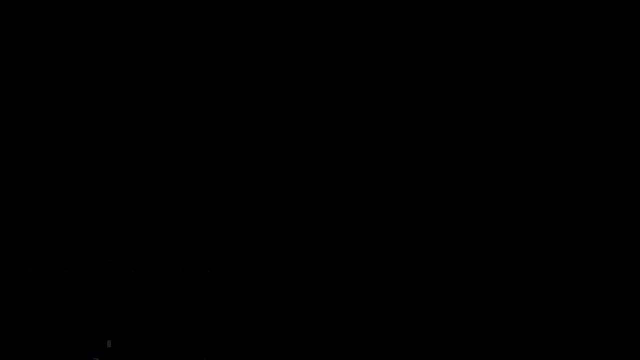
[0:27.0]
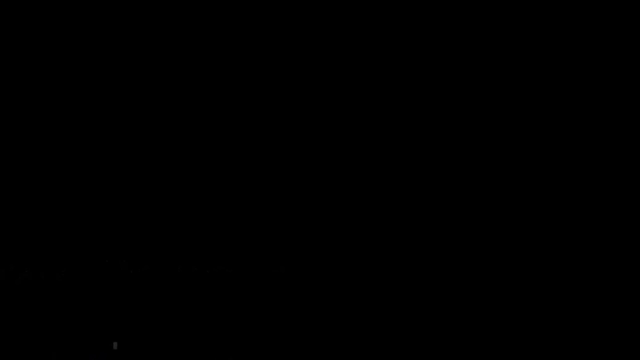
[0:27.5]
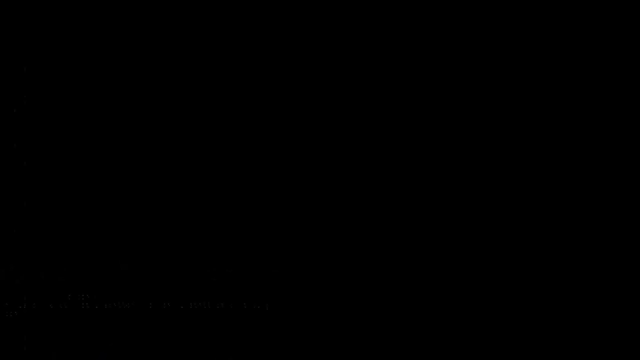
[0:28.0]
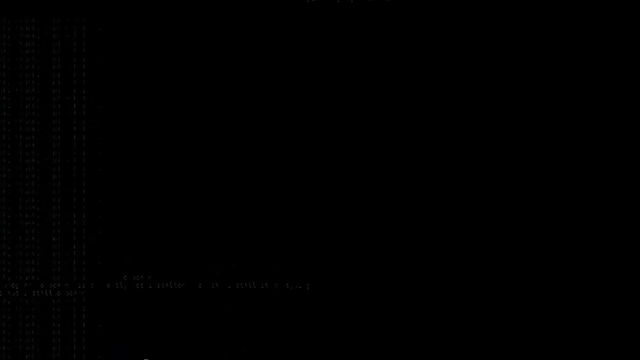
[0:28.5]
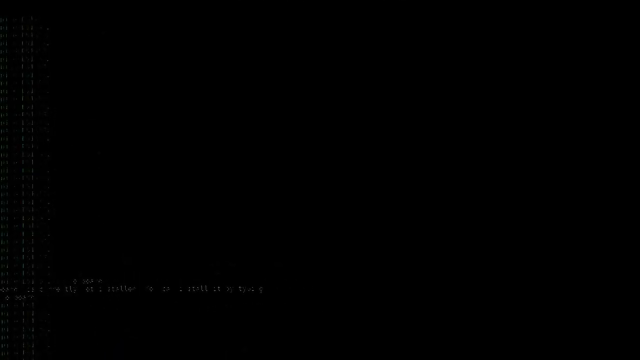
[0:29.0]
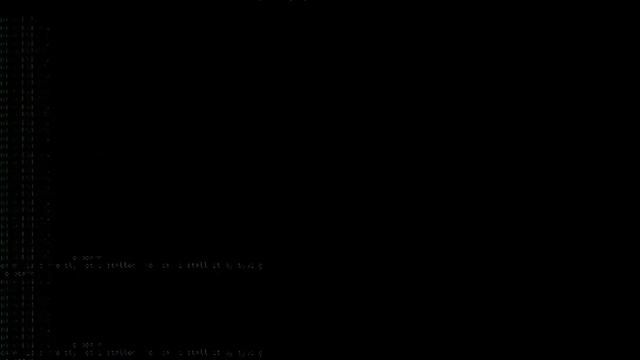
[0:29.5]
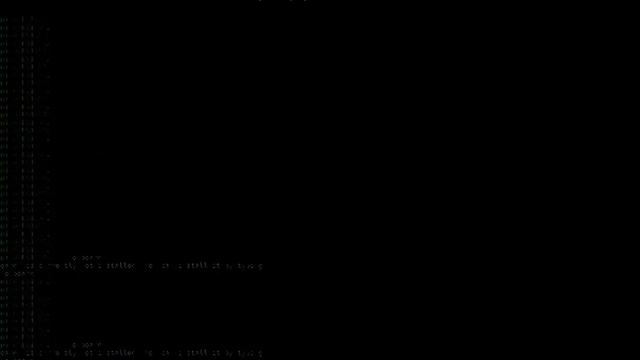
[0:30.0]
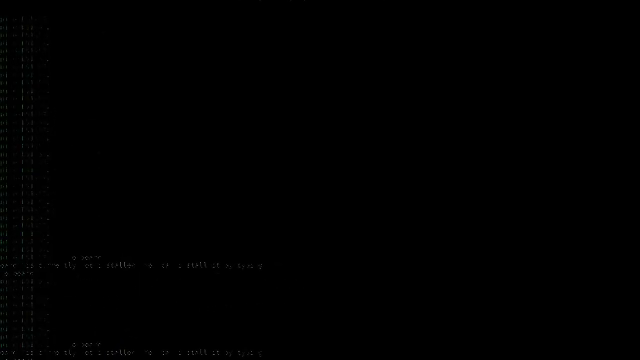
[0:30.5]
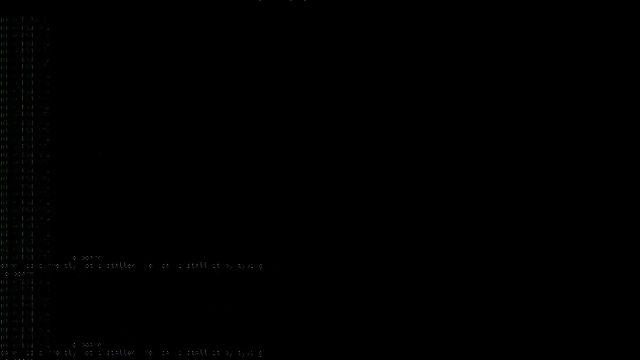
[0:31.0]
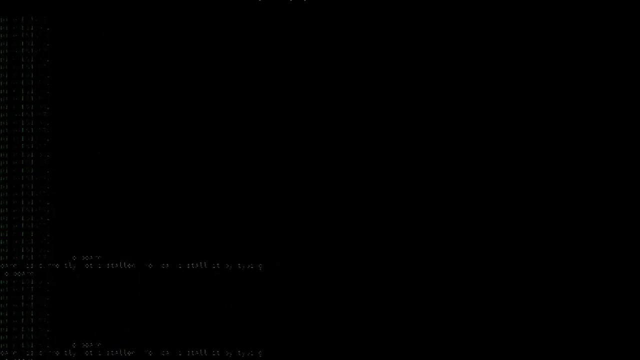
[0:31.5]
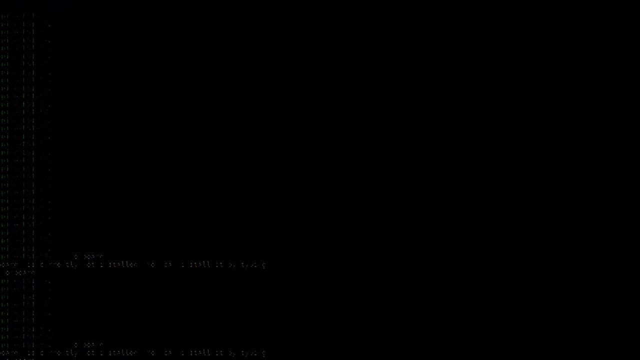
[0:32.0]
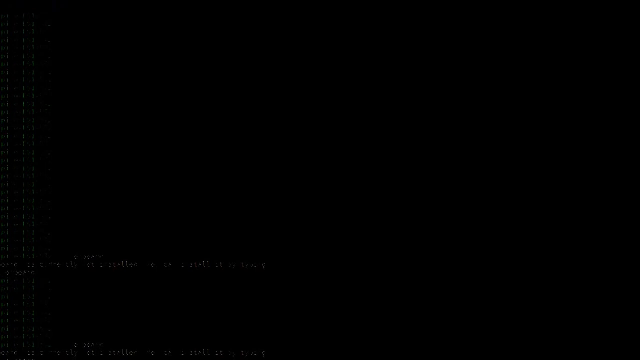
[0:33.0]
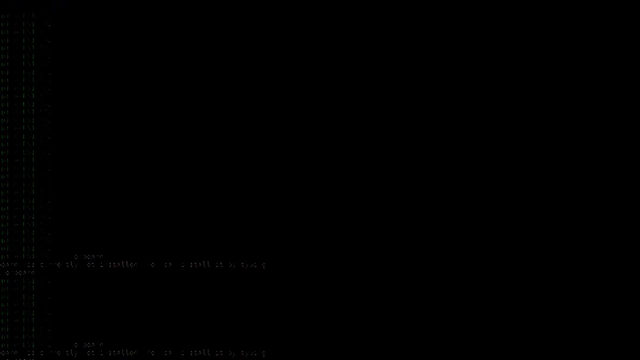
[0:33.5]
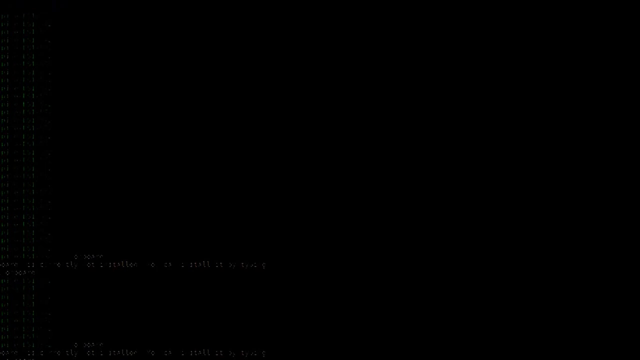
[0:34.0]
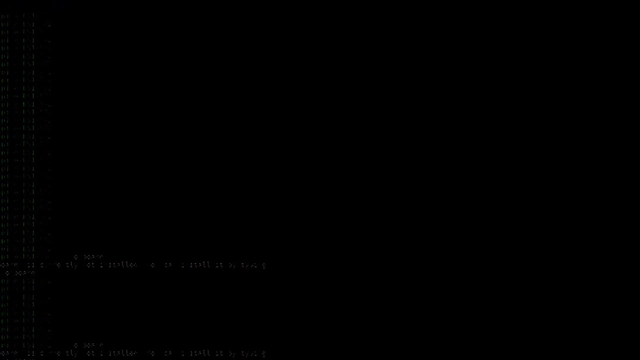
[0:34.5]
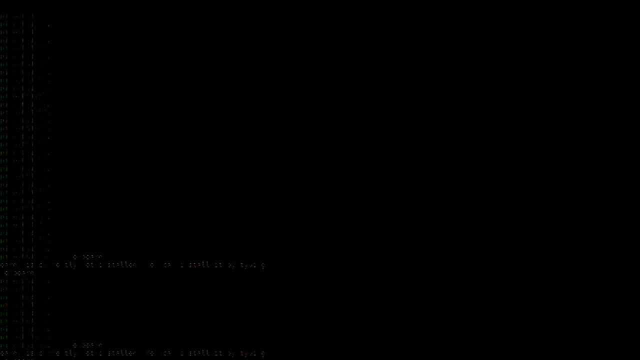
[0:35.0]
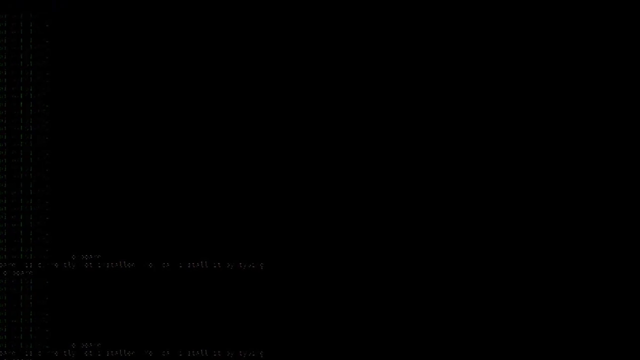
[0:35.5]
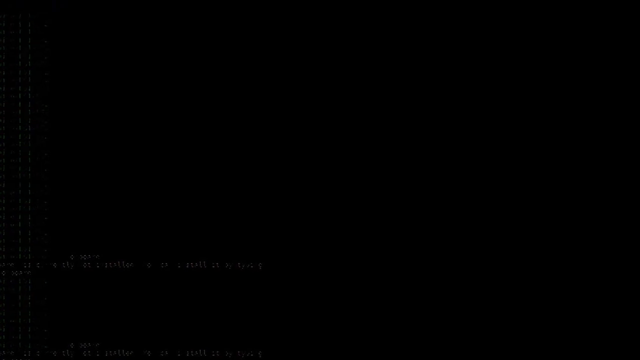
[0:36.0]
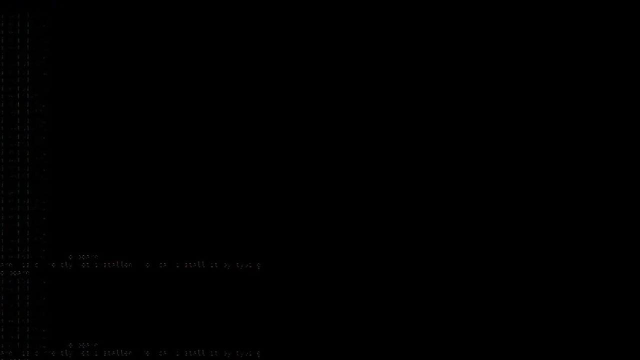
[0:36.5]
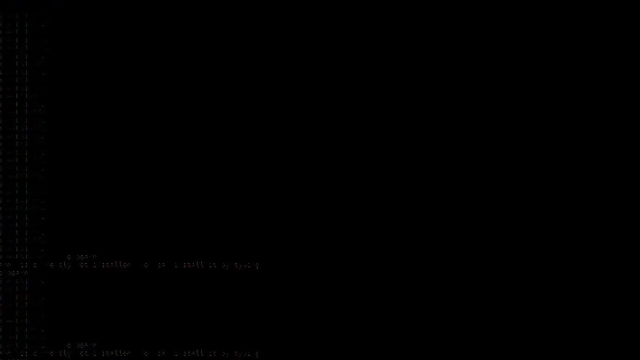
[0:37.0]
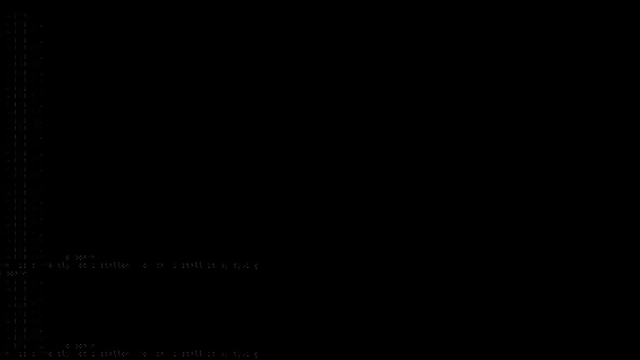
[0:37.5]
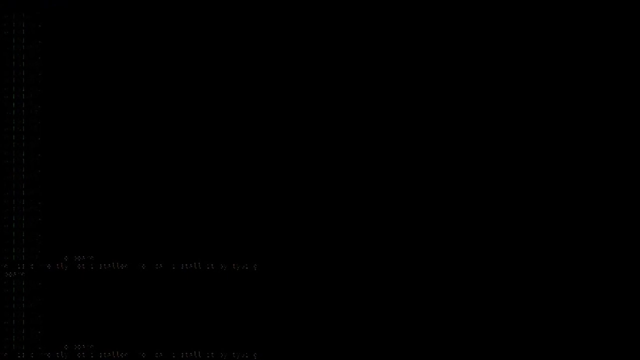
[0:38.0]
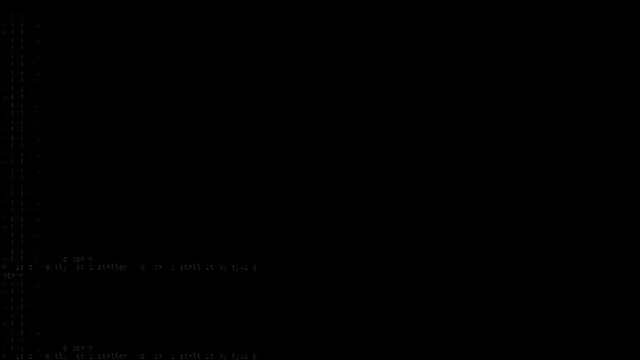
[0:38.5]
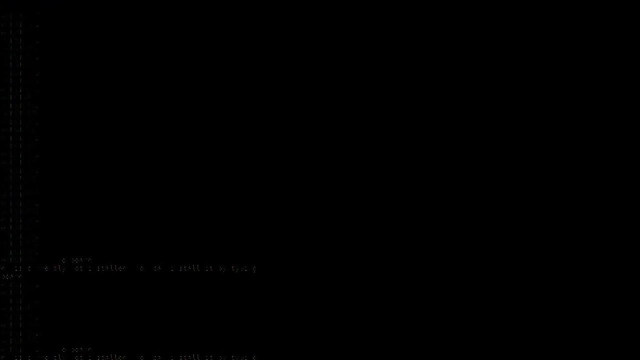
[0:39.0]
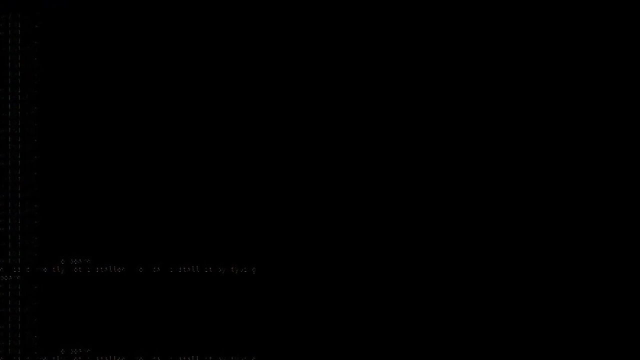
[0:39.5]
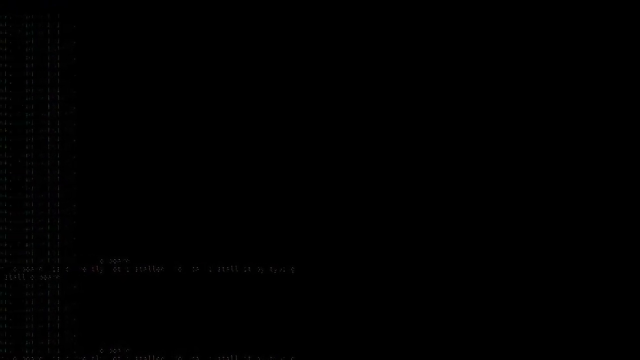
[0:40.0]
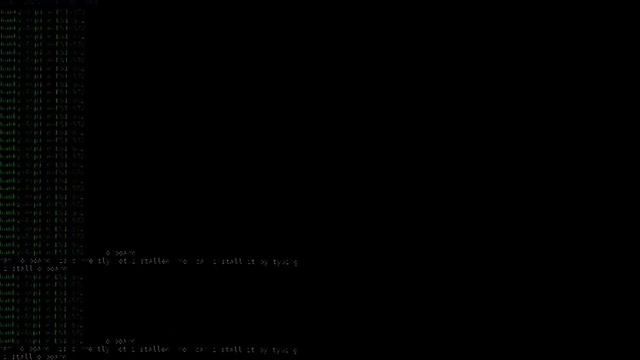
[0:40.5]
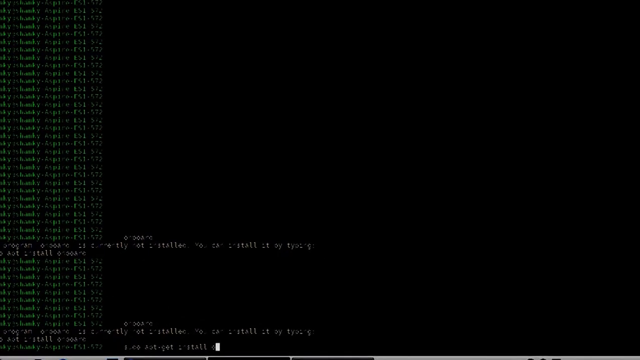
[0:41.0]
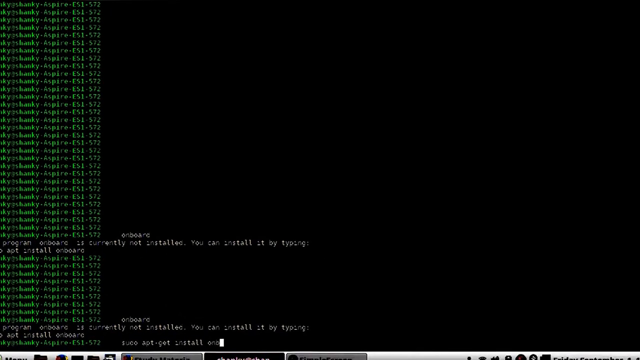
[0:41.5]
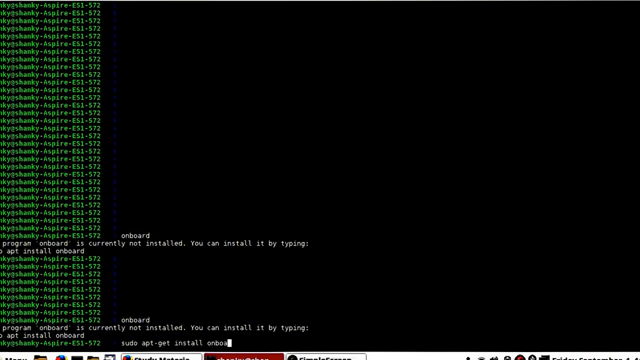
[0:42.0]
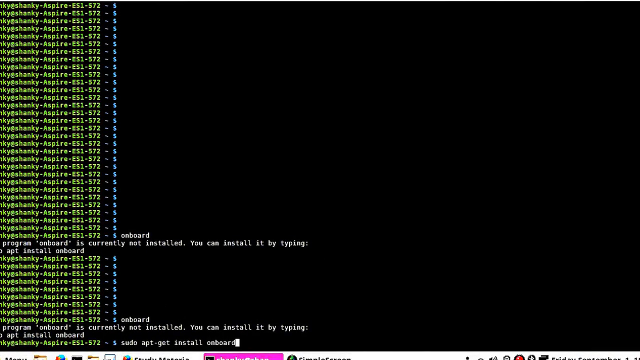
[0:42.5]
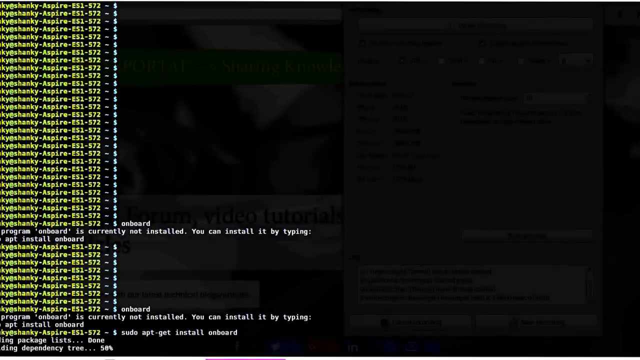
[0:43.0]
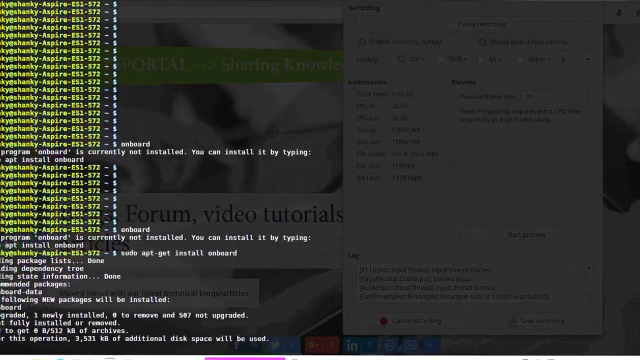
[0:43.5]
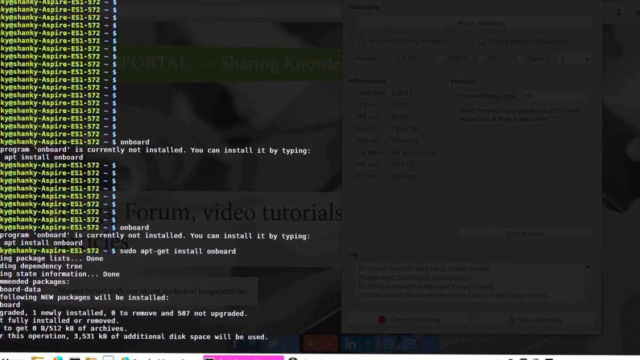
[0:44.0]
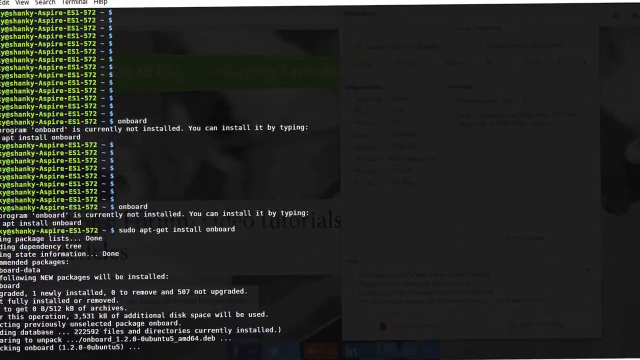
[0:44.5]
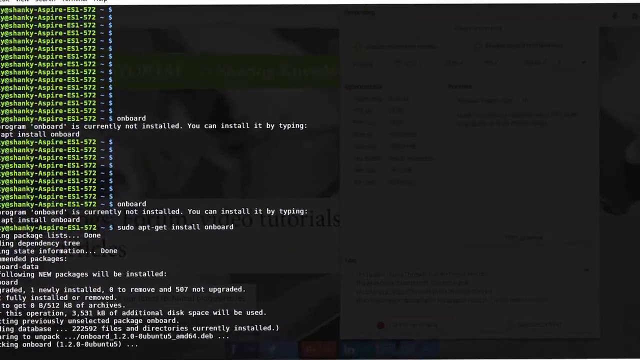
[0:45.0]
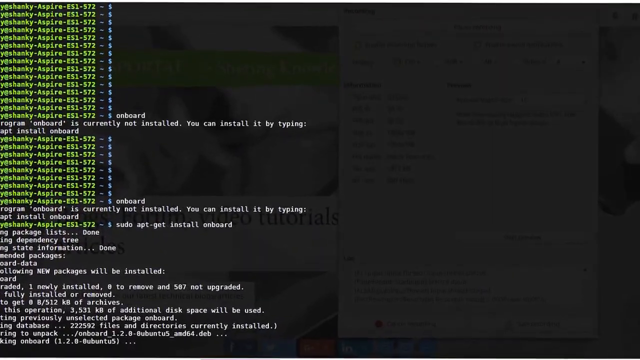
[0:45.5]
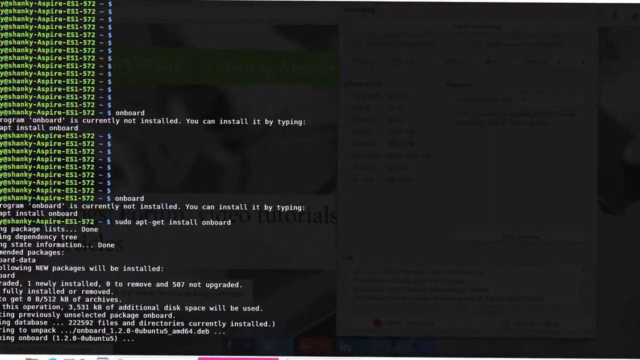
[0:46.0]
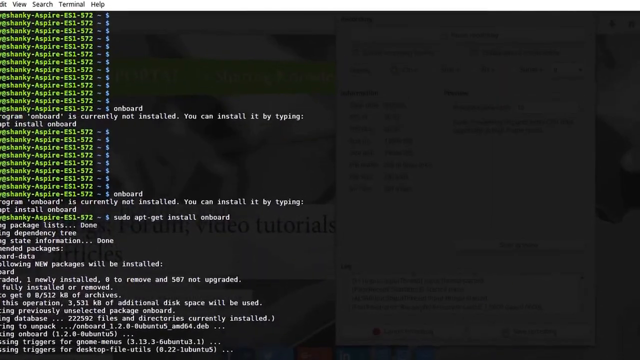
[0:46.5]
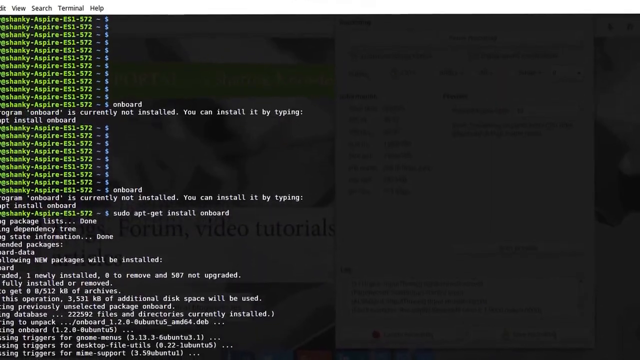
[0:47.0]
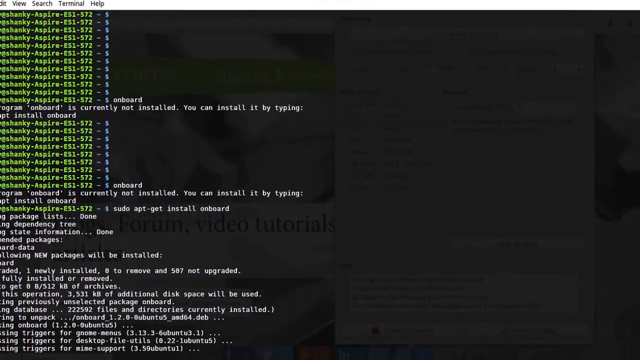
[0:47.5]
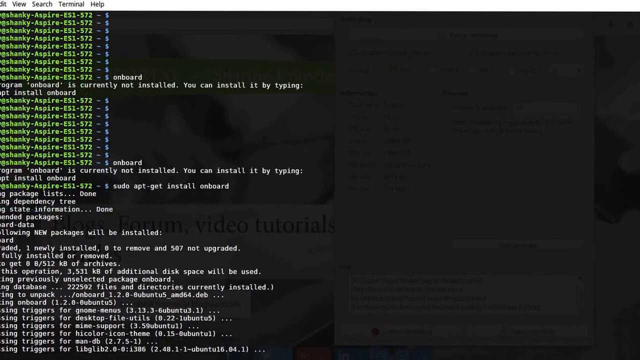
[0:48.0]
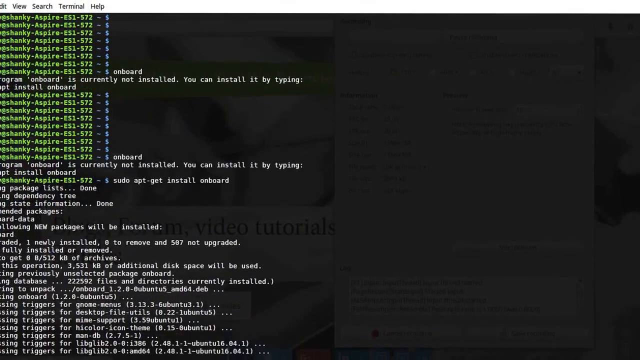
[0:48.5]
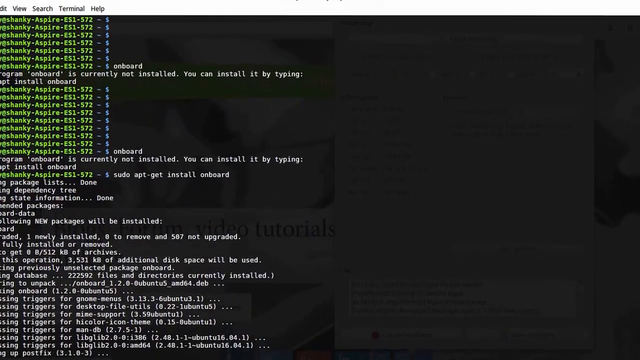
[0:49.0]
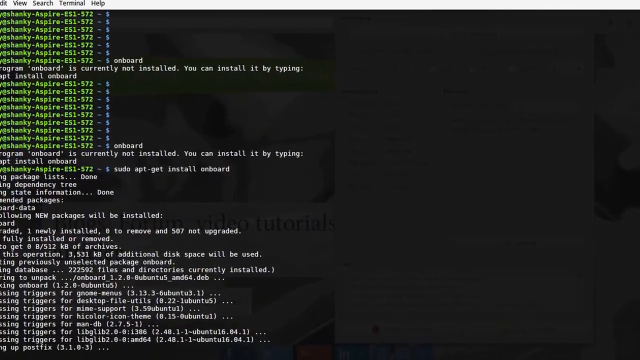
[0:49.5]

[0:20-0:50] The screen is entirely black for a full 8 seconds. Then the text on the left side slowly begins to fade in and scroll up. The screen moves and the text on the left becomes more legible. It brightens steadily, and the black background changes to a faded web entry and program data box. The background then fades again, while the text on the left-hand side becomes brighter and more legible; it includes bright green text as well as white text. The camera is shifting, so the text is not level. The green text, written all the way down the left-hand side of the screen, reads "AT SHANKY-ASPIRE-ES1-572-$" and repeats over and over. Eventually, just after one of the green lines, it reads "Onboard." The next line reads "Program Onboard is currently not installed. You can install it by typing," followed by an illegible part and "PT install on board."